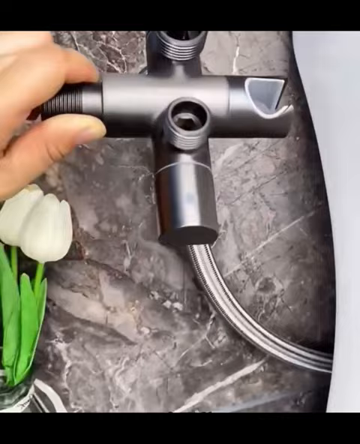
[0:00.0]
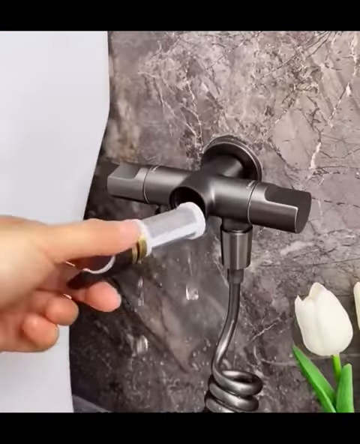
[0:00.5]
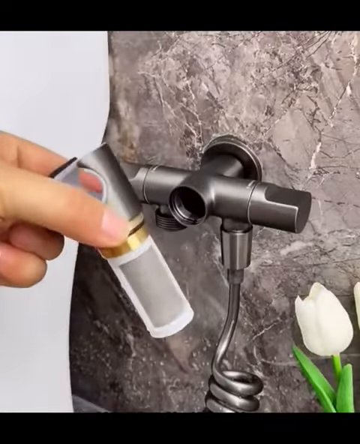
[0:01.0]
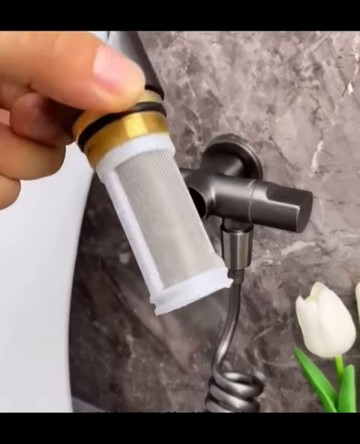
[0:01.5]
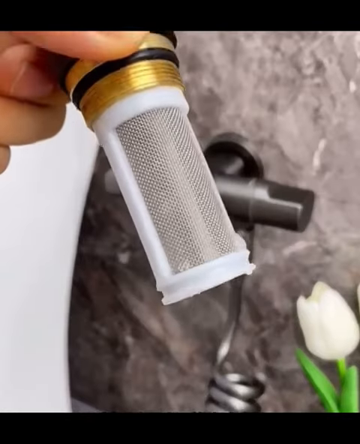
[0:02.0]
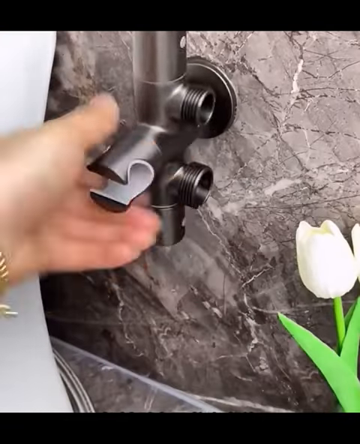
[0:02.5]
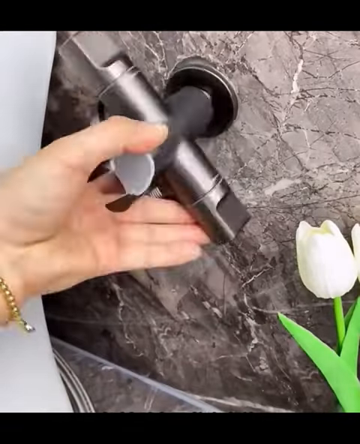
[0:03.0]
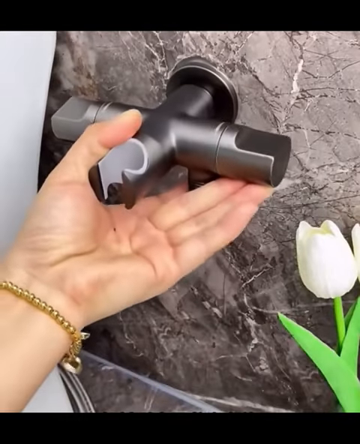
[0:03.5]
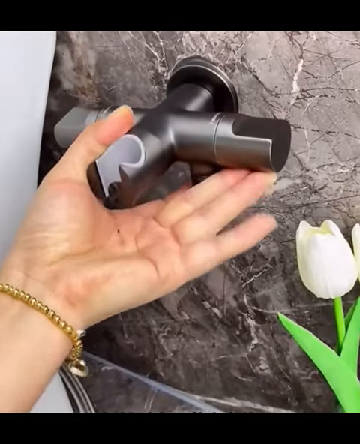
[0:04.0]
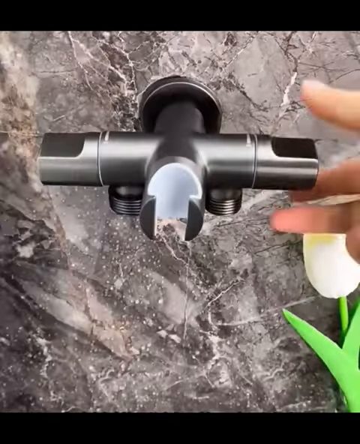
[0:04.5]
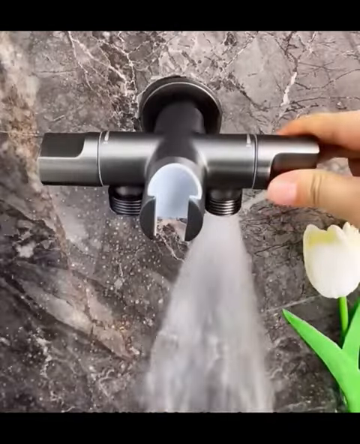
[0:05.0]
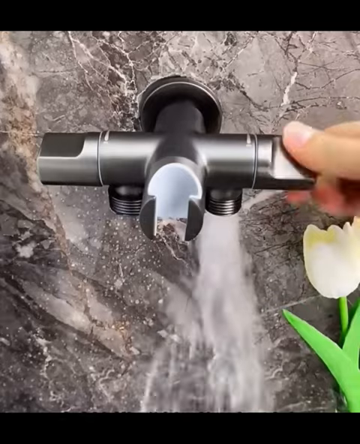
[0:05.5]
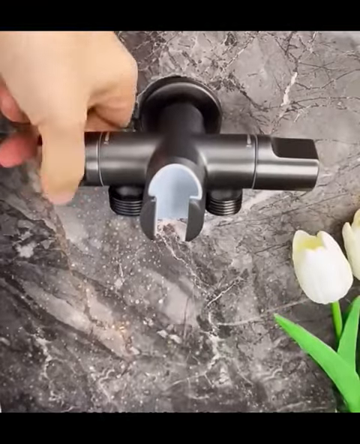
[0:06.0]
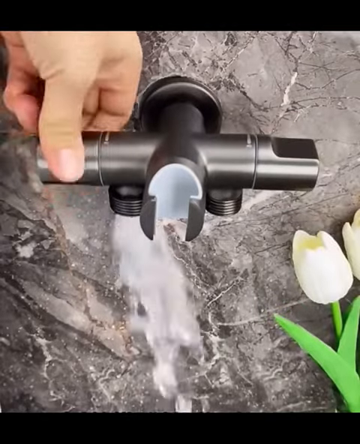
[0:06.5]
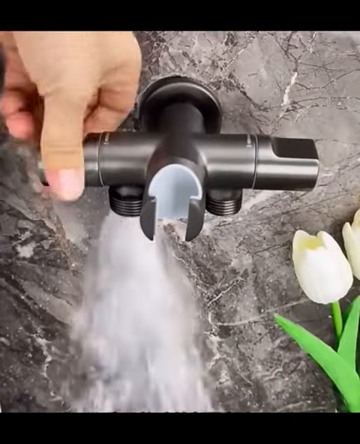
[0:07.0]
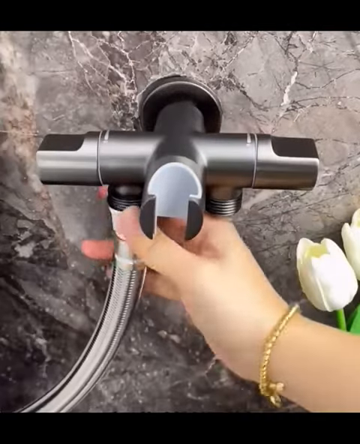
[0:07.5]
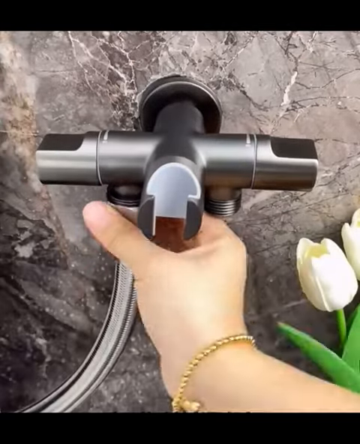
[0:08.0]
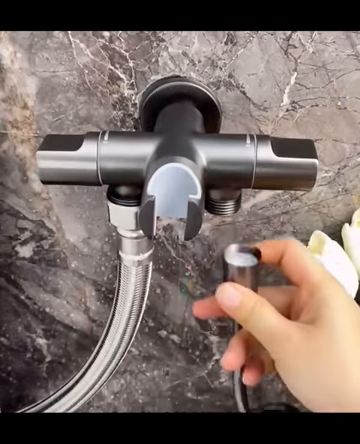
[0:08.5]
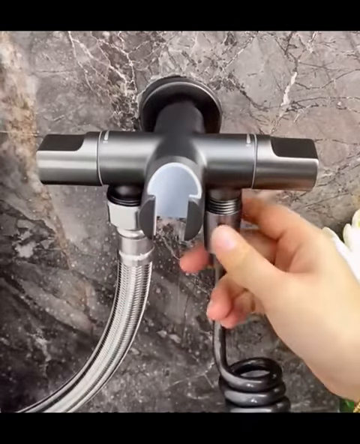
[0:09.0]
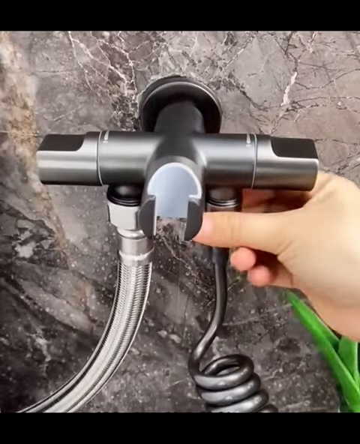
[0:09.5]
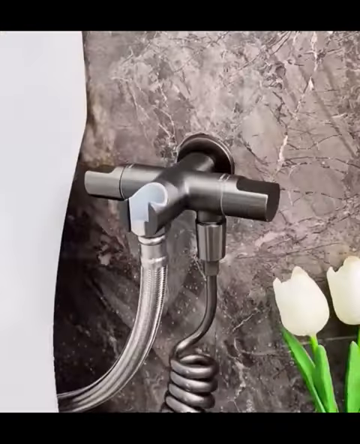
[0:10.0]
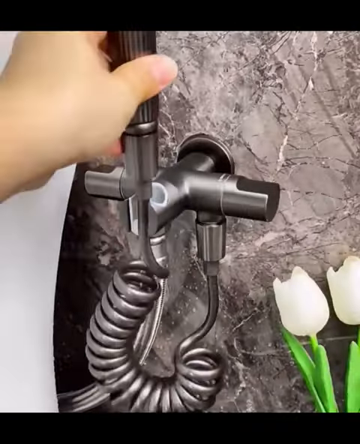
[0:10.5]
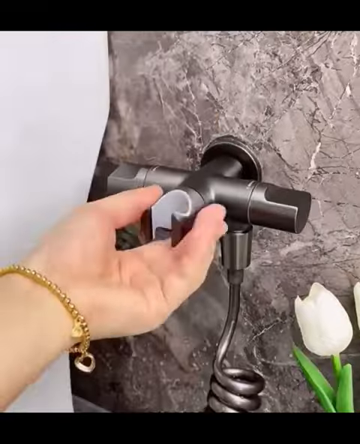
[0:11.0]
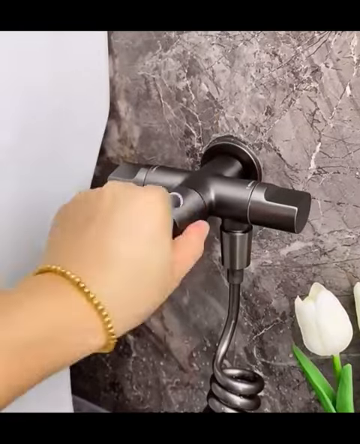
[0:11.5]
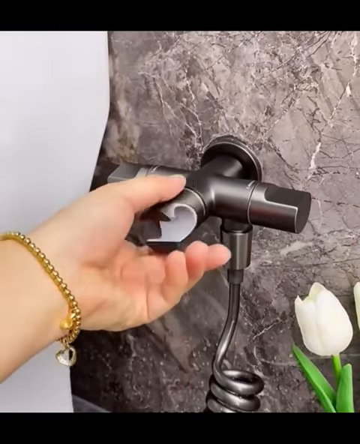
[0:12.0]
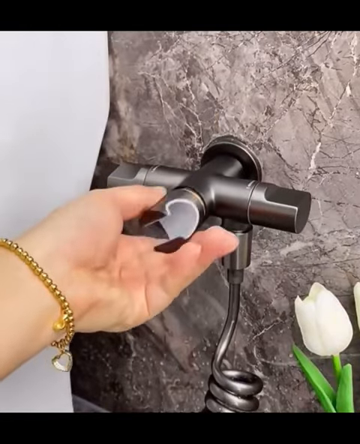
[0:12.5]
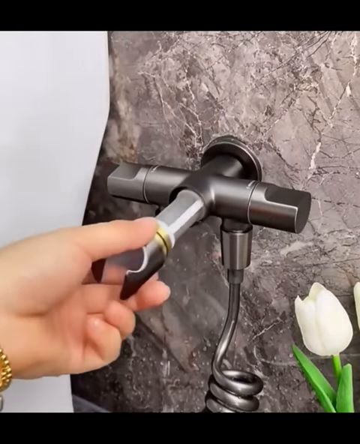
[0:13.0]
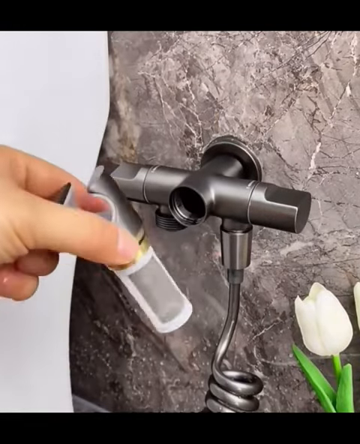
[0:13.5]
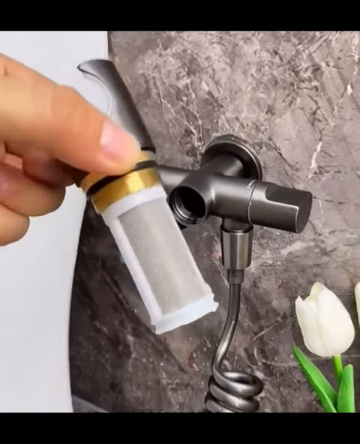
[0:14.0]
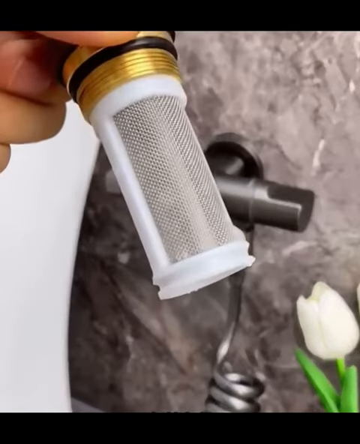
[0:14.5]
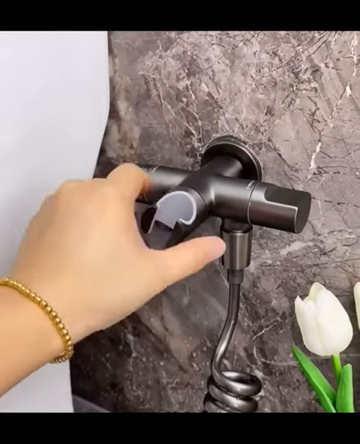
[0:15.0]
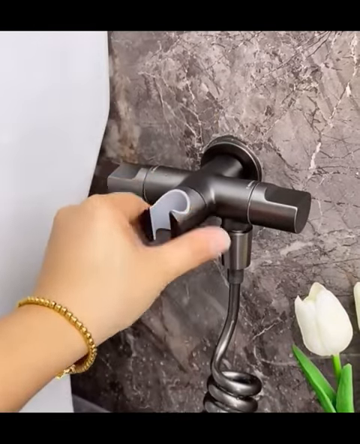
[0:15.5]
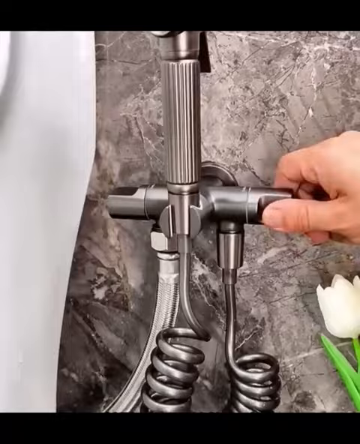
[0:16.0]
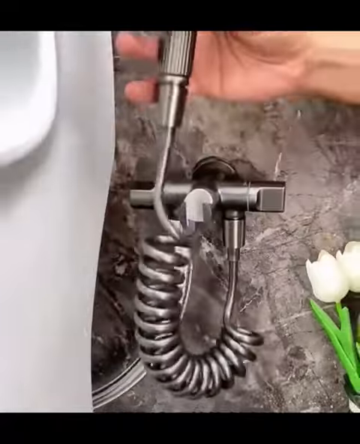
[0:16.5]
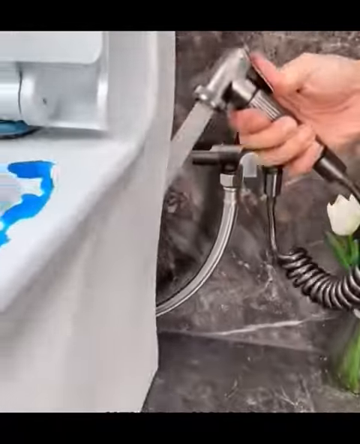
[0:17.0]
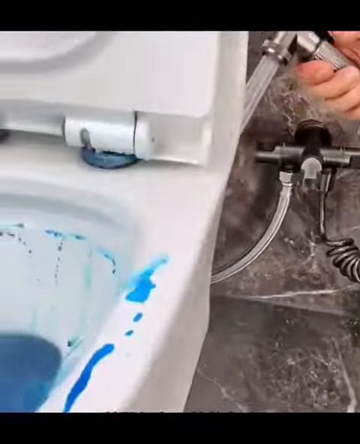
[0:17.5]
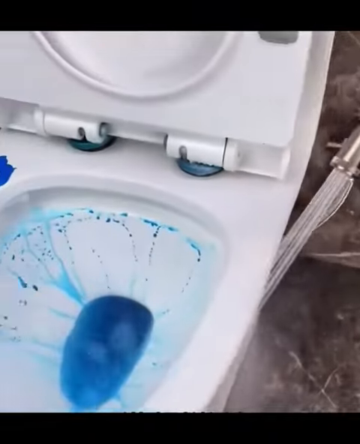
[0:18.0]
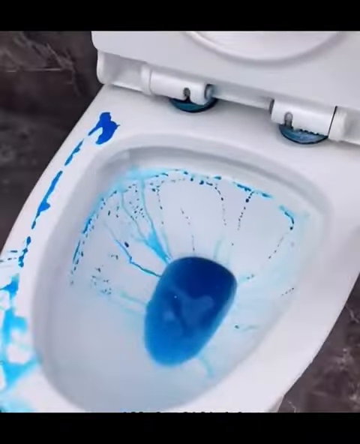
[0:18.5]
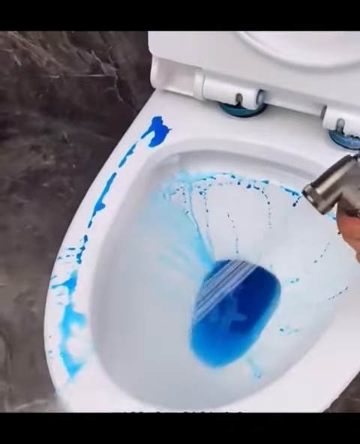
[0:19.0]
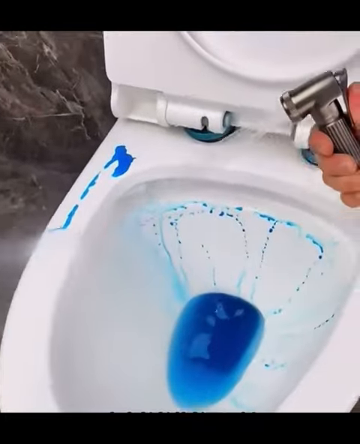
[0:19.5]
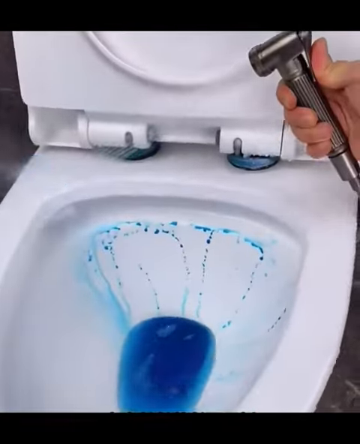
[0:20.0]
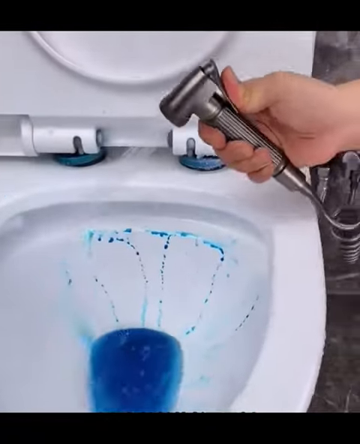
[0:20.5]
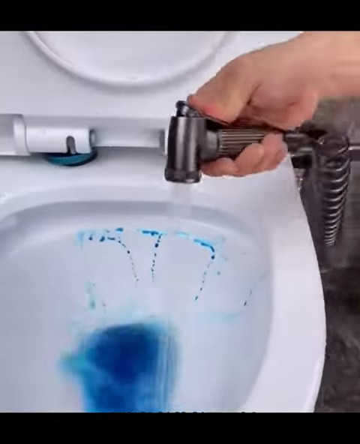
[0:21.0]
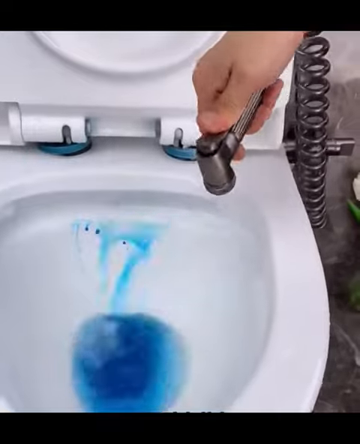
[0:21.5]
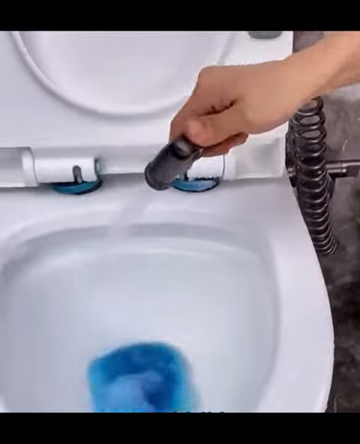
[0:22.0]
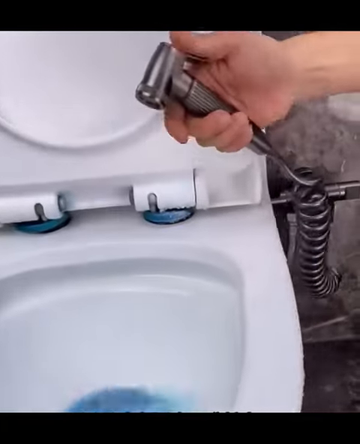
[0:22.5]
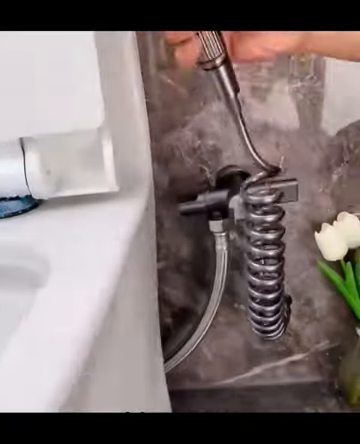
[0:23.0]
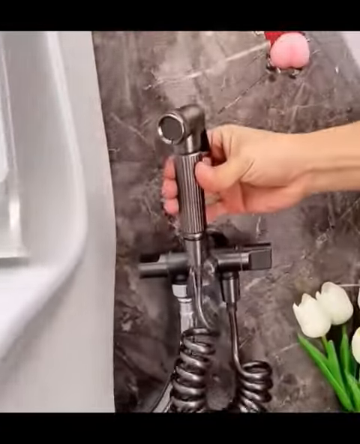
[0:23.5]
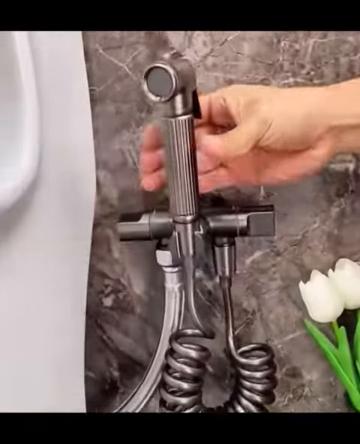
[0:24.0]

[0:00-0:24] The video demonstrates how a mixer tap works, including a feature inside the tap that collects loose particles. The mixer tap comes with a spray head and is fitted next to a toilet, with a detachable nozzle that can be used as a spray gun on the surfaces and the ceramic bowl of the toilet. The tap is mounted on a grey veined marble tiled wall, and there are plastic tulip flowers in the bottom right corner of the area where the tap is mounted. A person's hand demonstrates the actions, twisting the hot and warm water controls on either side of the tap and showing how to use the button-action spray gun.